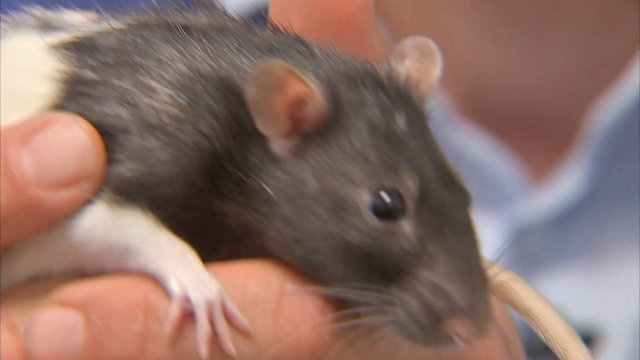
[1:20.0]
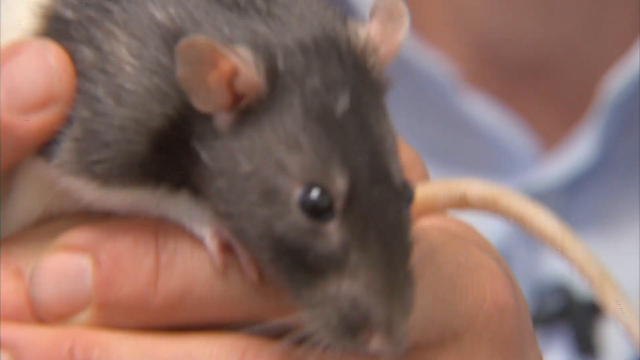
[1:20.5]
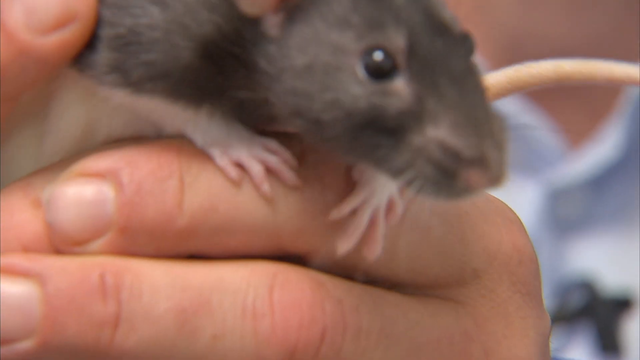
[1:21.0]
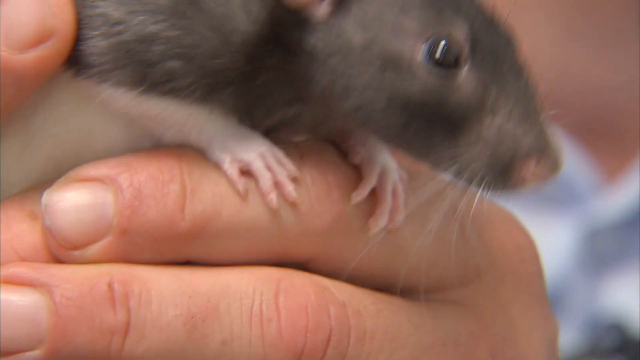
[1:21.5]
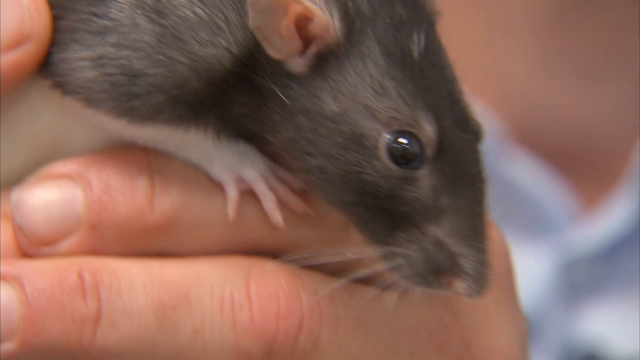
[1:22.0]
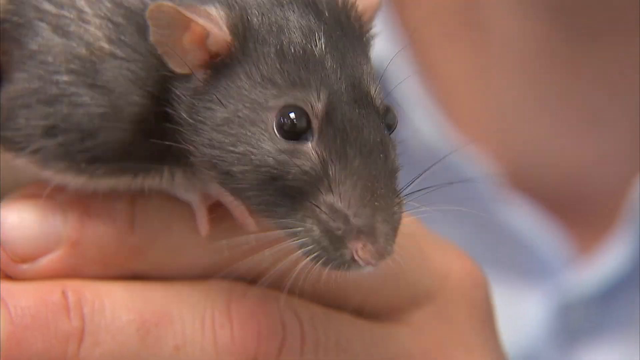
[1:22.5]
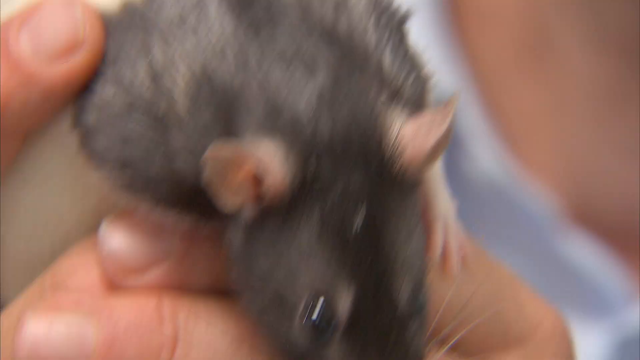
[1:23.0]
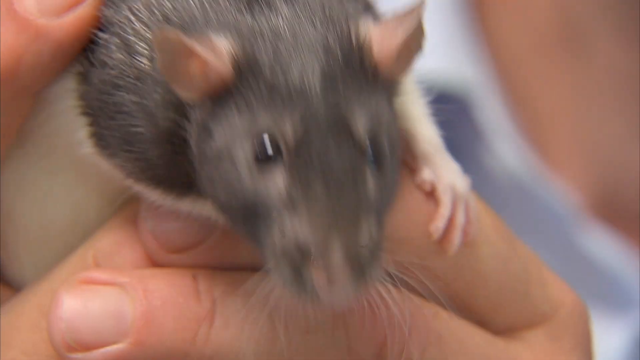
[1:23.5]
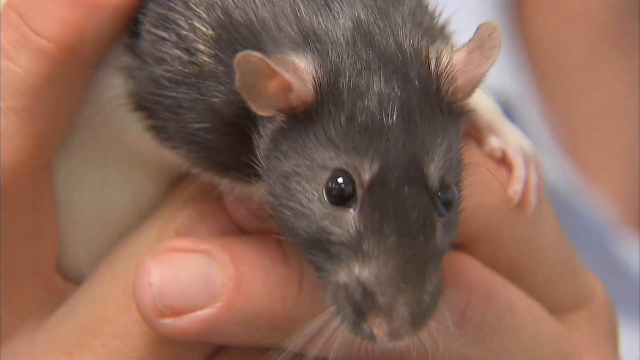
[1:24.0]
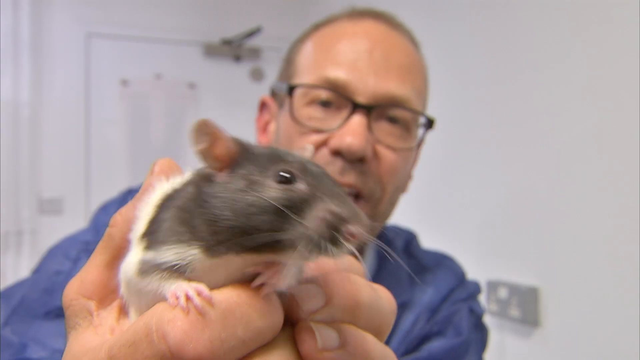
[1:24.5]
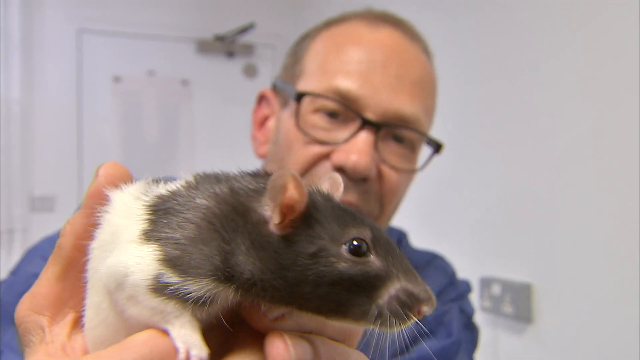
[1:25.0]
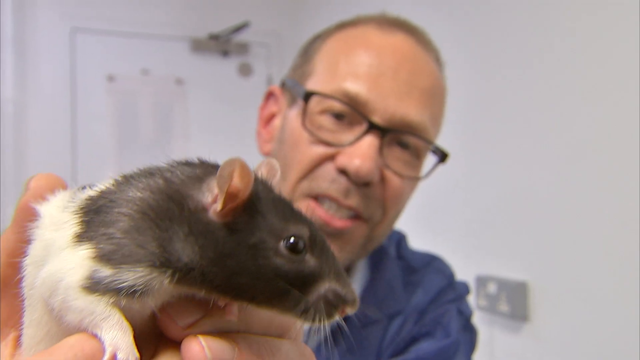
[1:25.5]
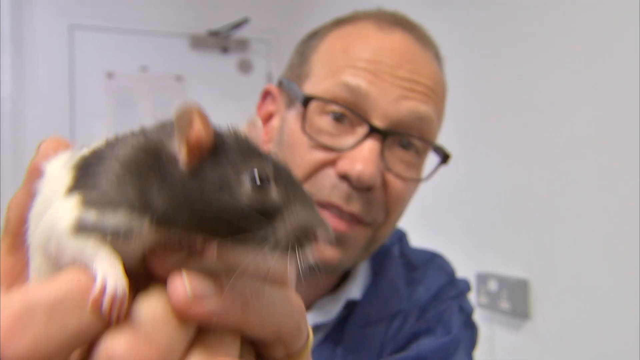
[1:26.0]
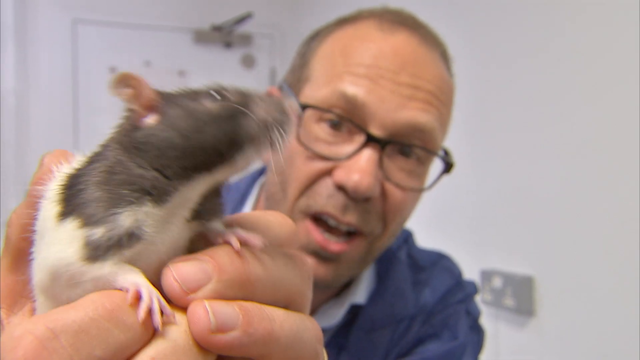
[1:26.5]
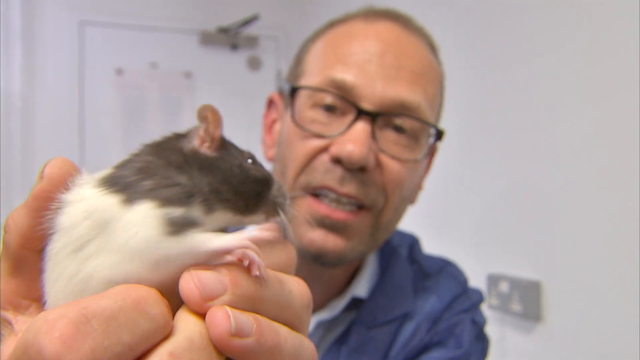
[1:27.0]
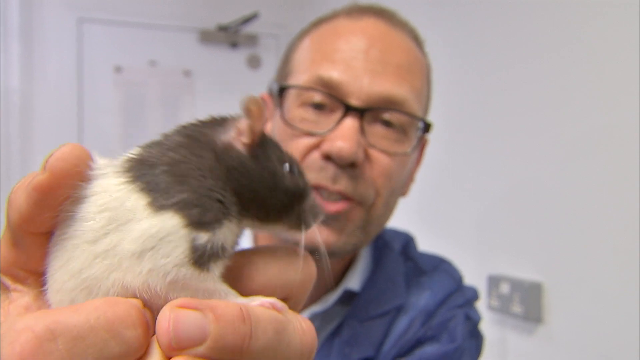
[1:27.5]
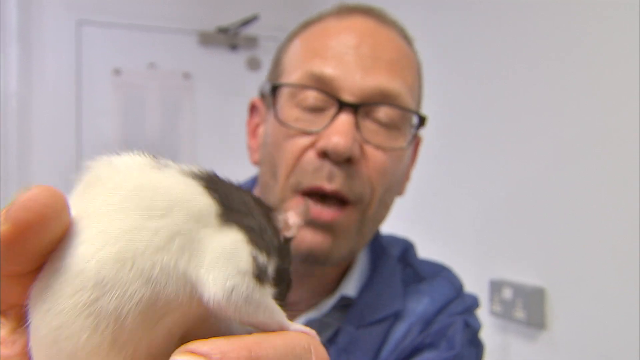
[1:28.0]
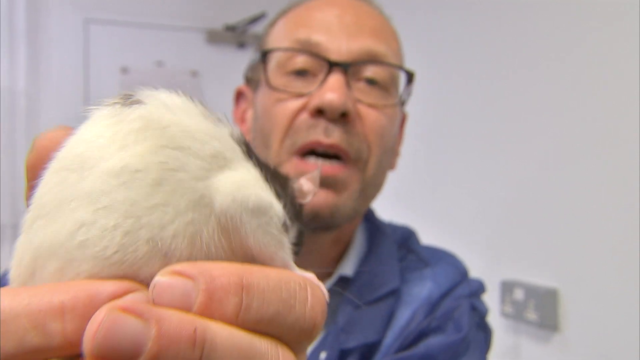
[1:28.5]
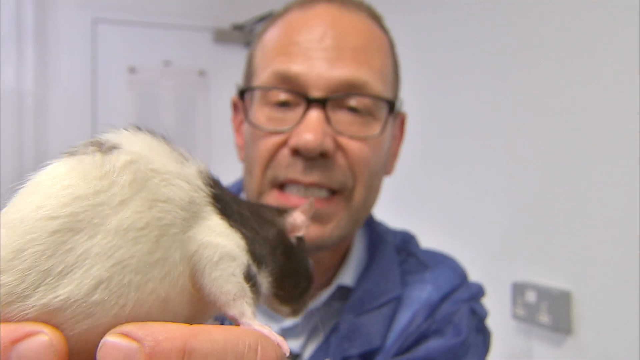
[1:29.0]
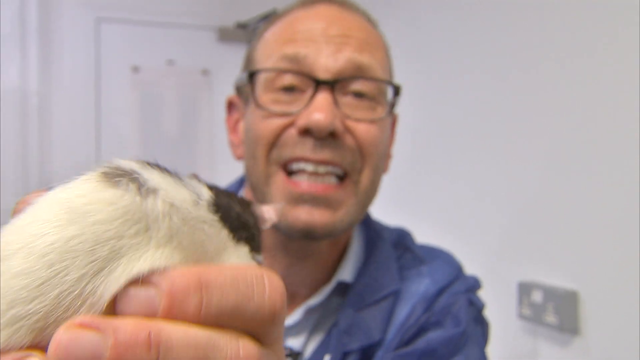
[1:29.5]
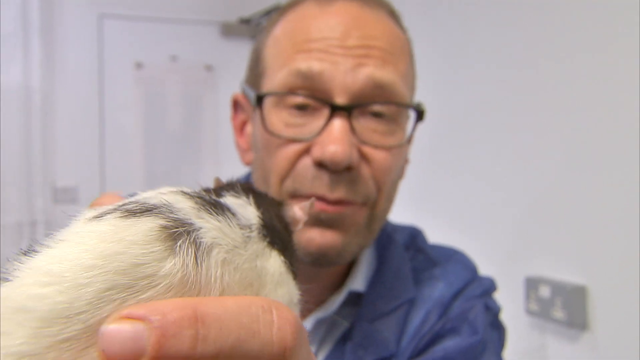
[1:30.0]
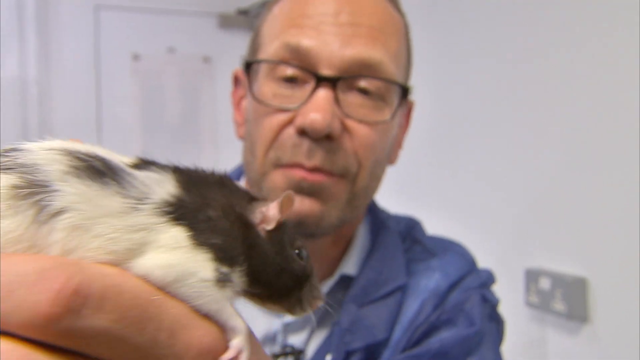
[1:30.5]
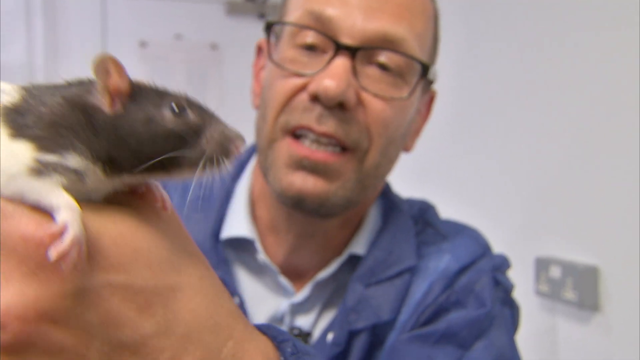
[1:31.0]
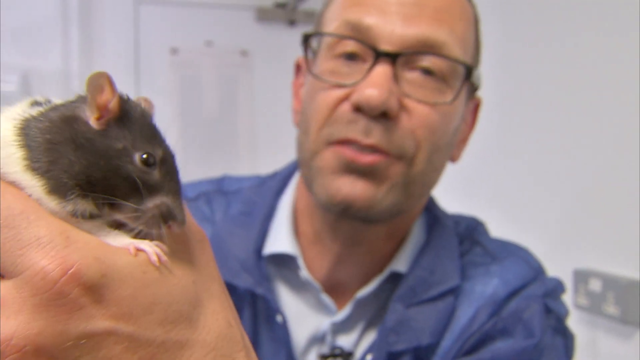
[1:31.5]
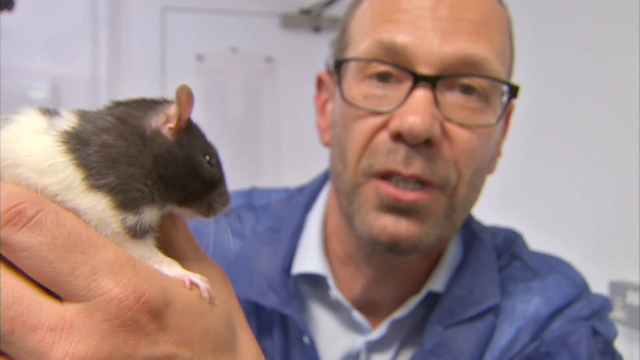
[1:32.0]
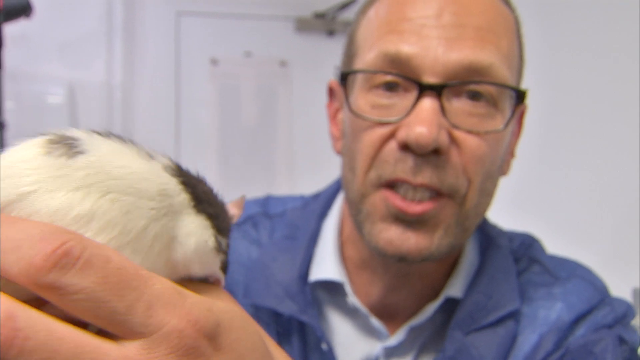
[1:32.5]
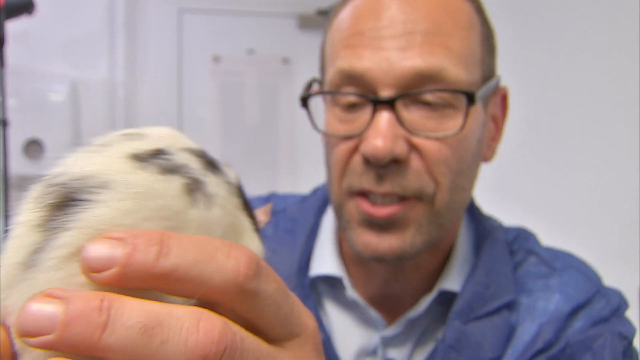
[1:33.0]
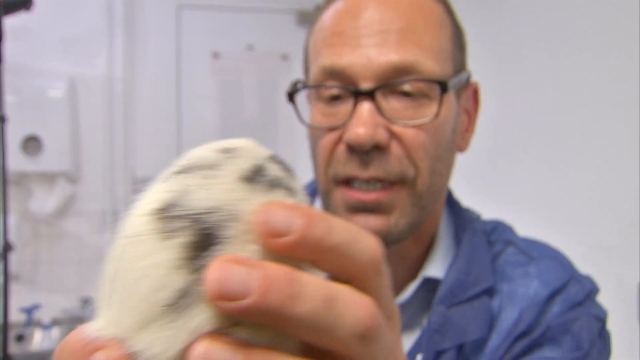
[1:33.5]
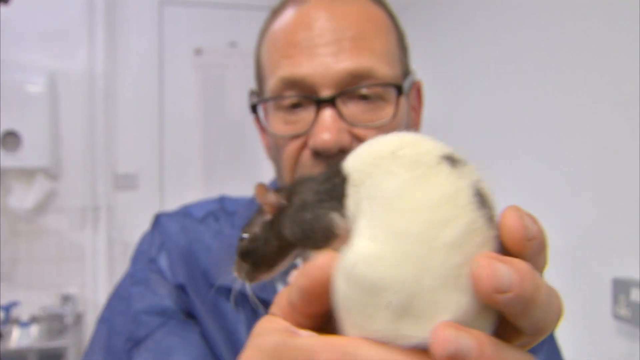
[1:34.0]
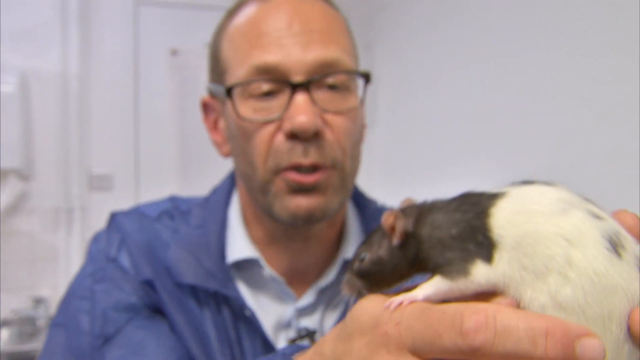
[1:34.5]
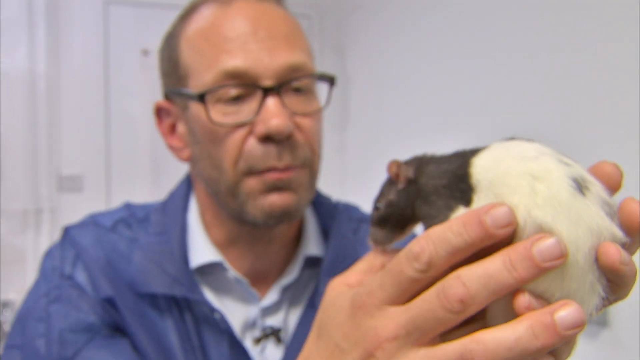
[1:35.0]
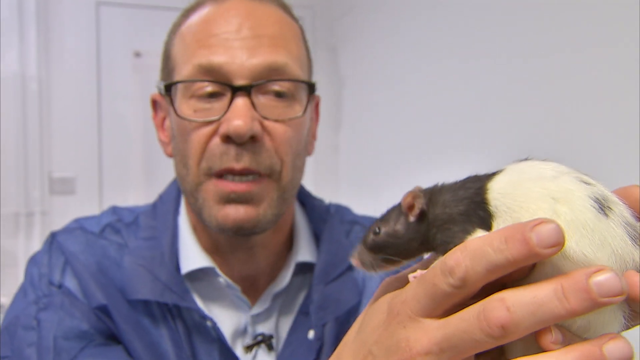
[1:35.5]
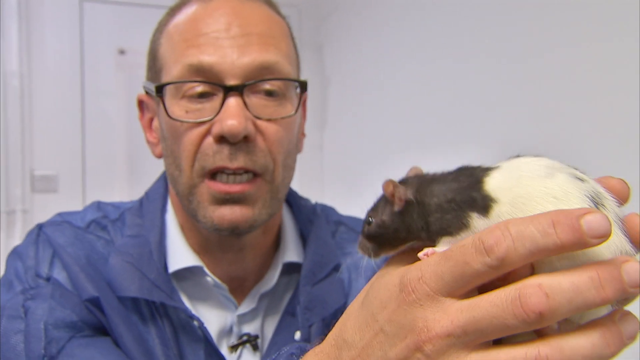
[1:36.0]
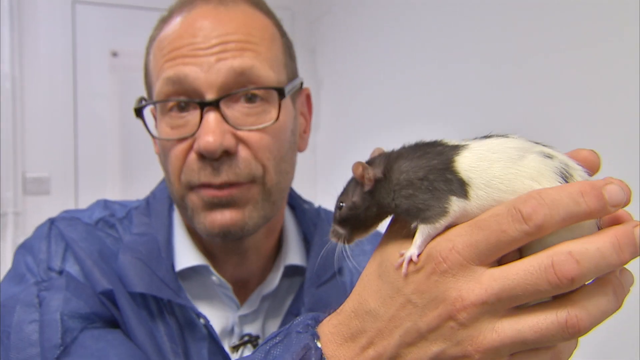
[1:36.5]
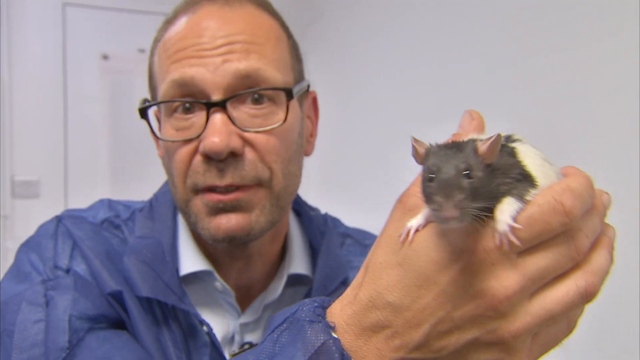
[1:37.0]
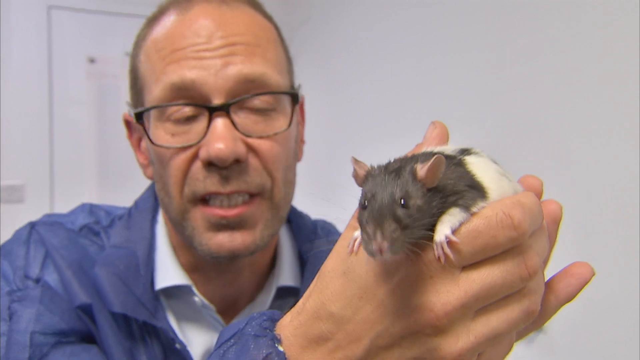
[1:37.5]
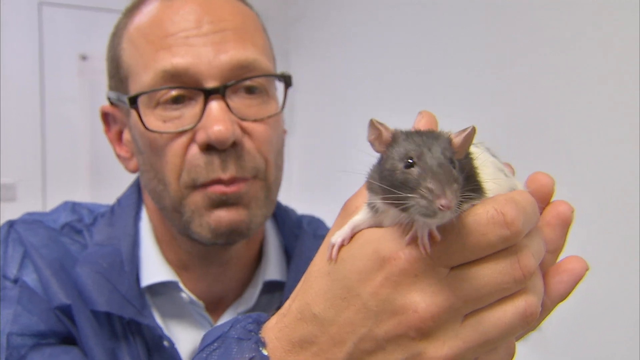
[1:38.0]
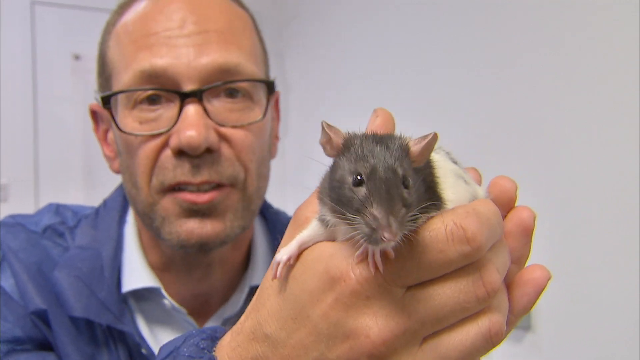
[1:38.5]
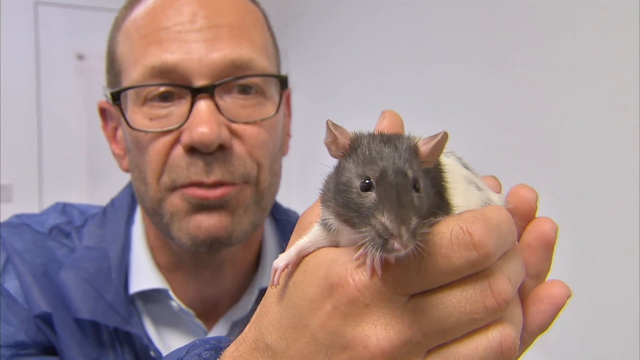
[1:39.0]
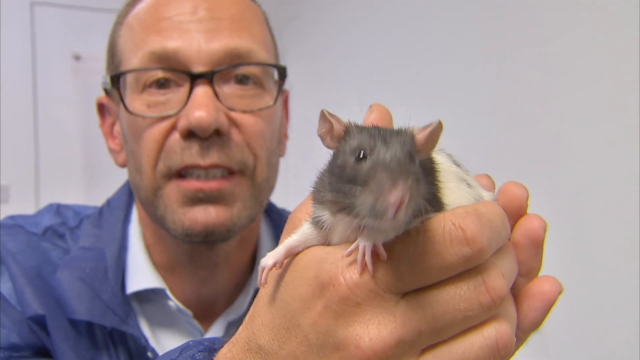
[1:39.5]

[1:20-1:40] A male-looking scientist with very short hair and glasses holds one of the rats, which is white and brown with little brown spots here and there. He wears blue overalls and talks to the camera, seemingly about the rat, occasionally looking at the camera and then turning to look at the rat. He turns the rat away from the camera and then back to face it. The room seems to have white walls, with a door in the background bearing some sort of image. A tissue dispenser is visible in the background, and a wall socket is at the bottom right. The rat seems to be sniffing everywhere, and as he turns it, more of its brown spots become visible.